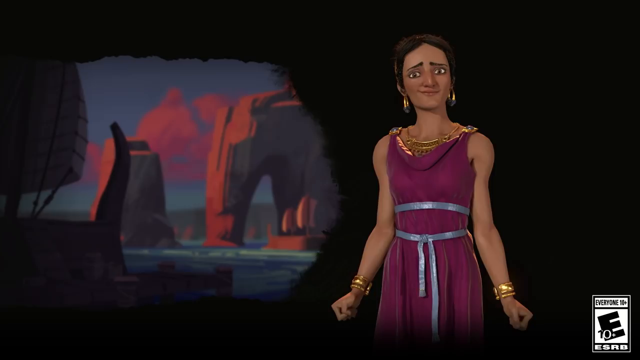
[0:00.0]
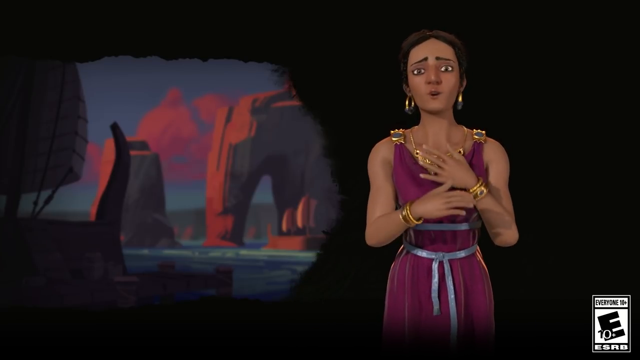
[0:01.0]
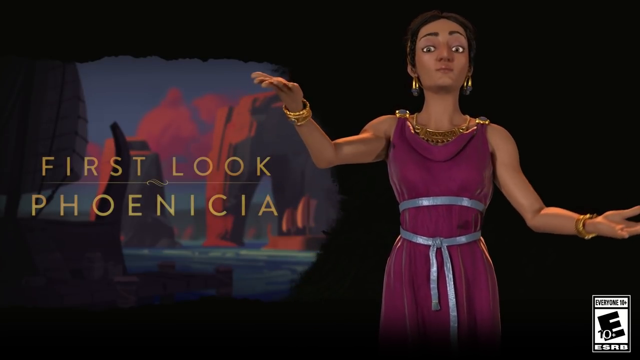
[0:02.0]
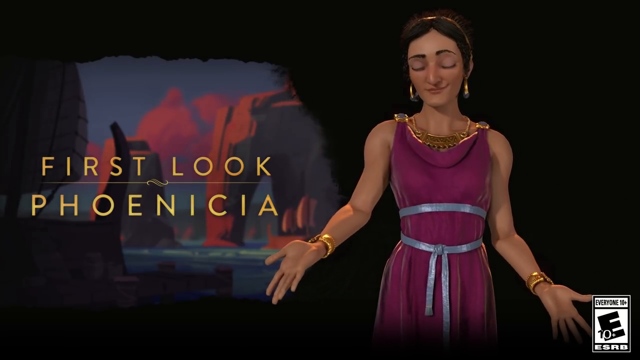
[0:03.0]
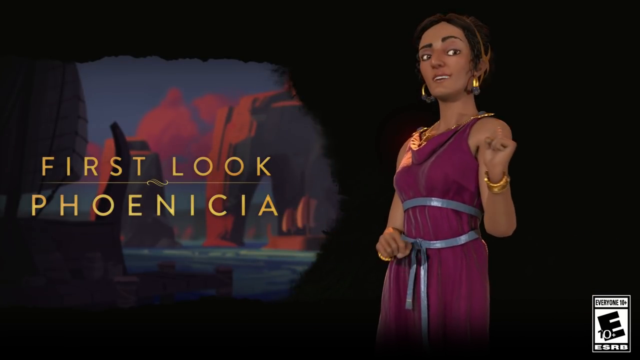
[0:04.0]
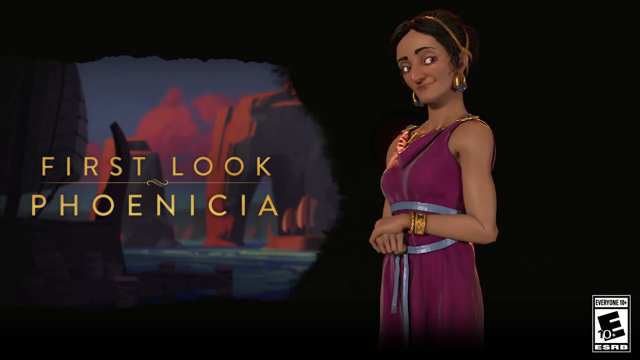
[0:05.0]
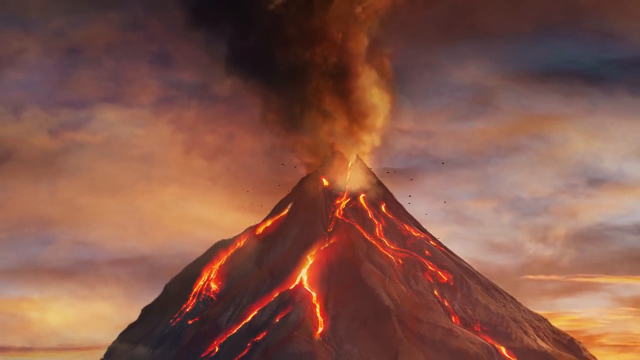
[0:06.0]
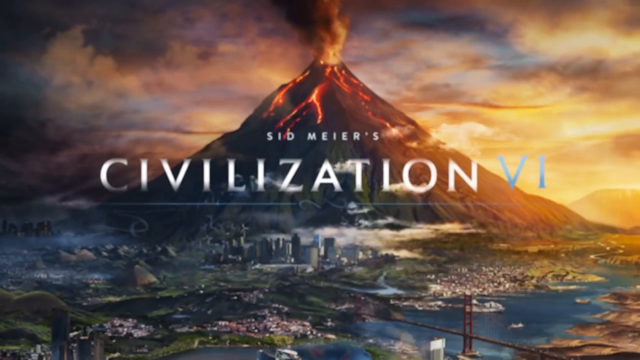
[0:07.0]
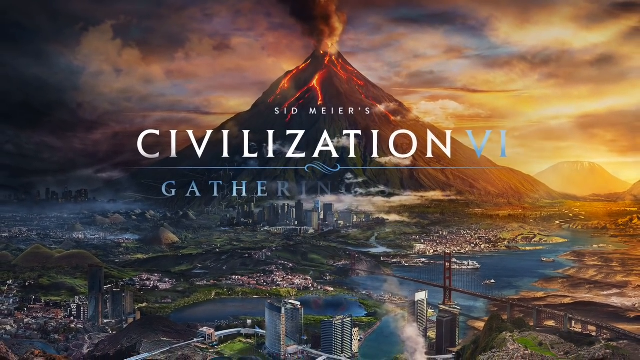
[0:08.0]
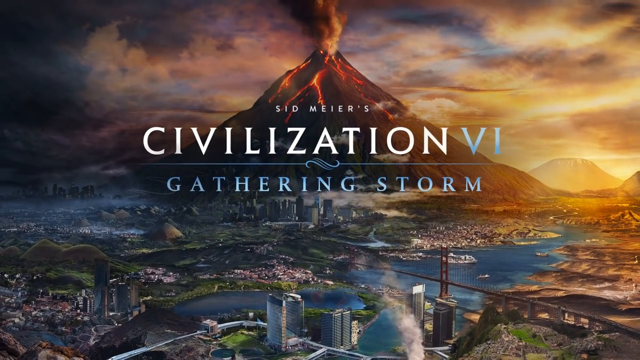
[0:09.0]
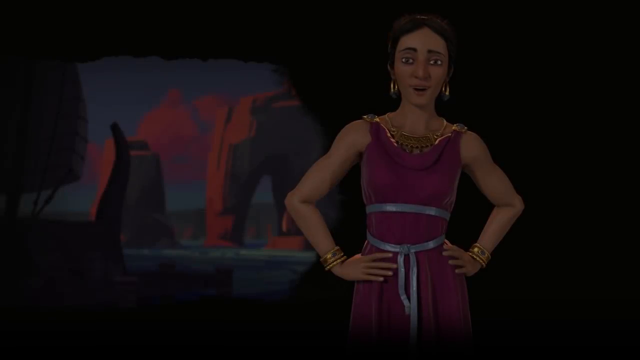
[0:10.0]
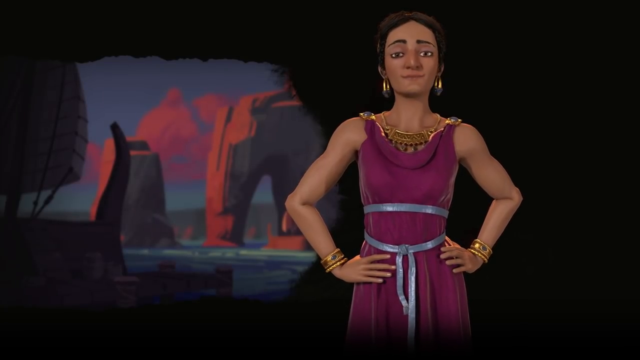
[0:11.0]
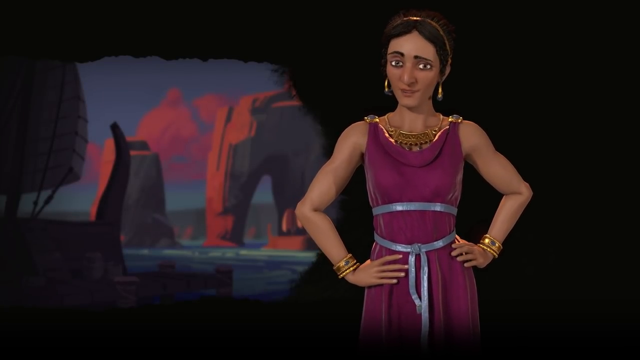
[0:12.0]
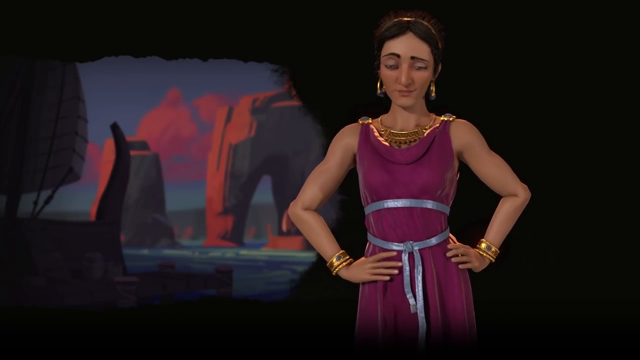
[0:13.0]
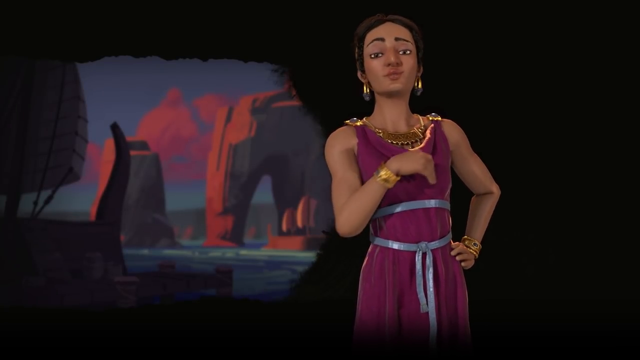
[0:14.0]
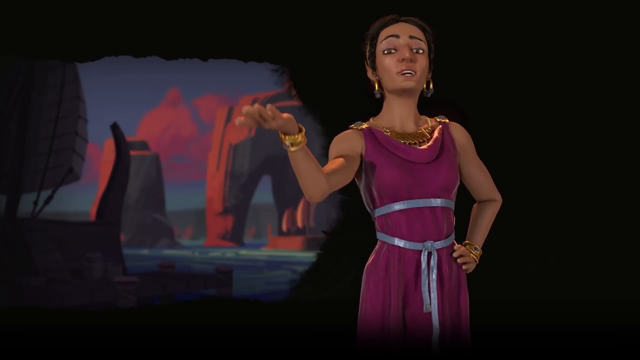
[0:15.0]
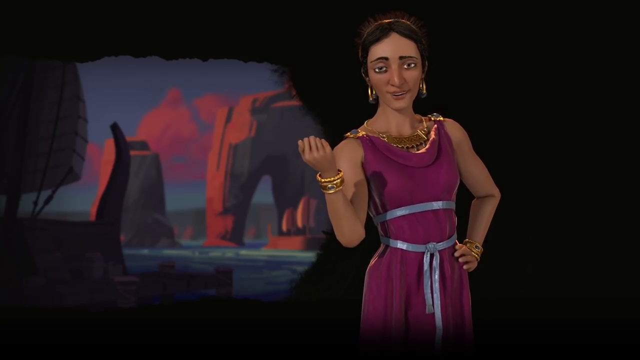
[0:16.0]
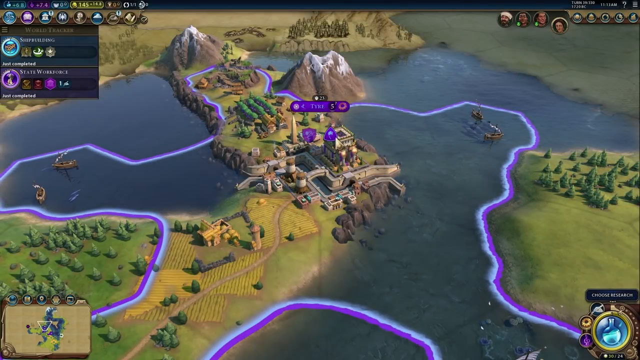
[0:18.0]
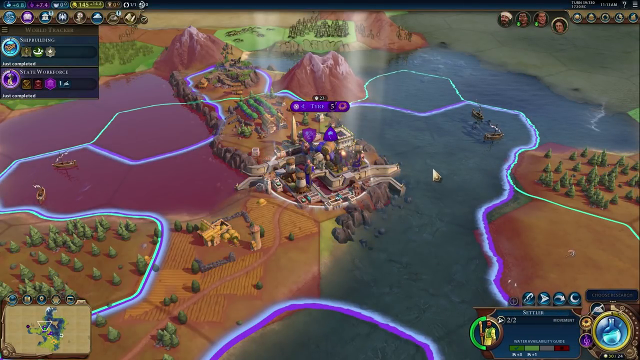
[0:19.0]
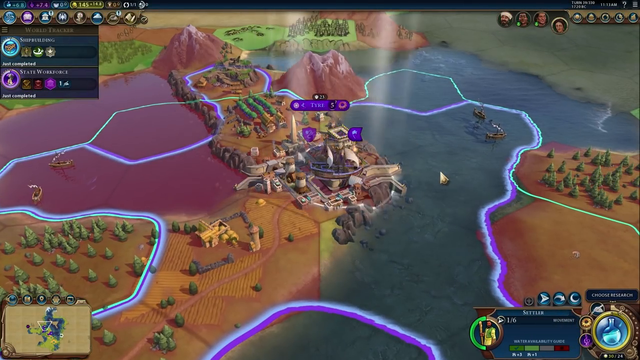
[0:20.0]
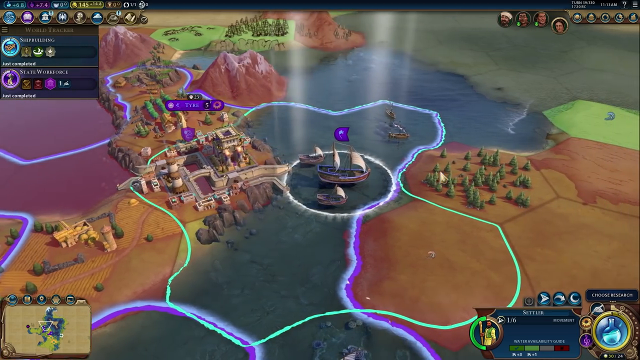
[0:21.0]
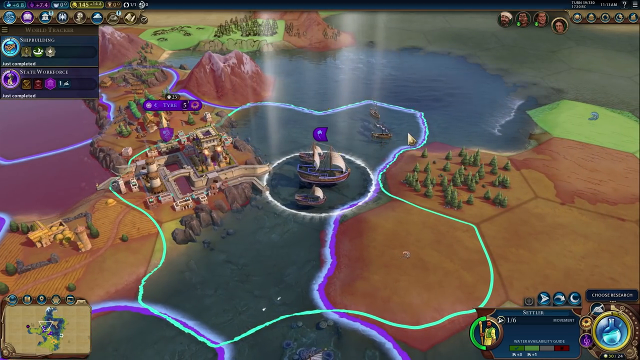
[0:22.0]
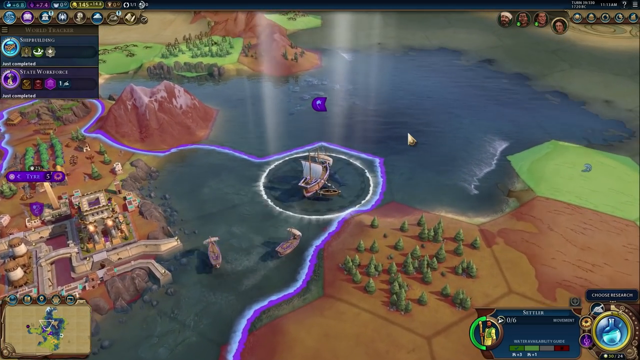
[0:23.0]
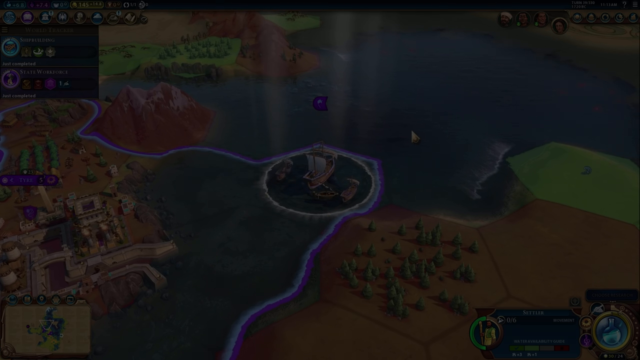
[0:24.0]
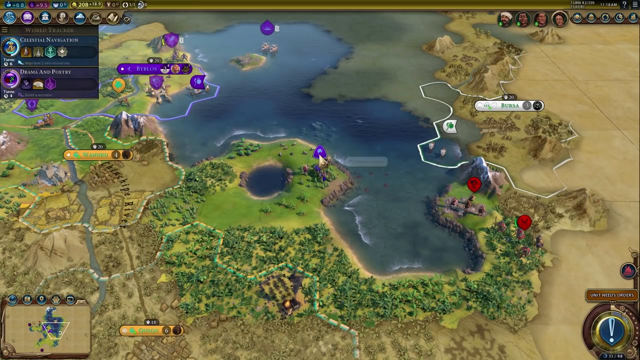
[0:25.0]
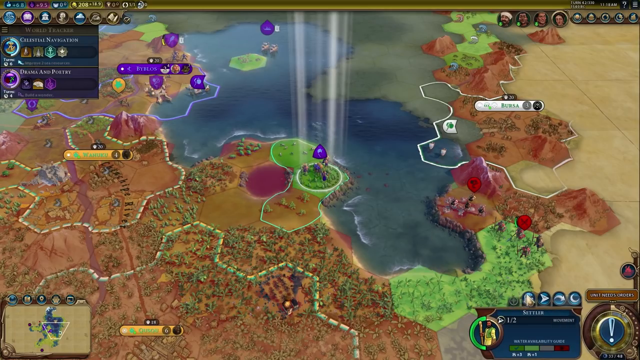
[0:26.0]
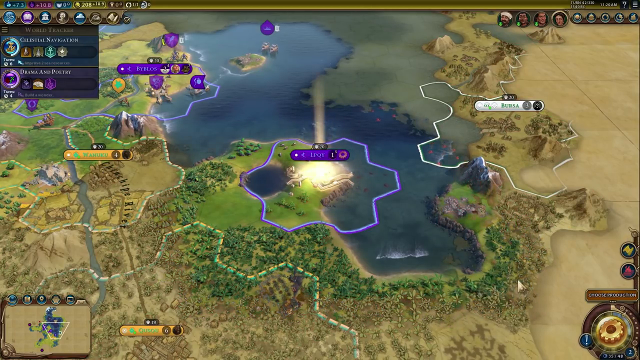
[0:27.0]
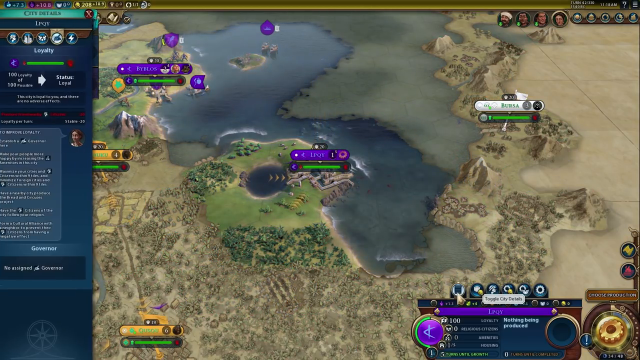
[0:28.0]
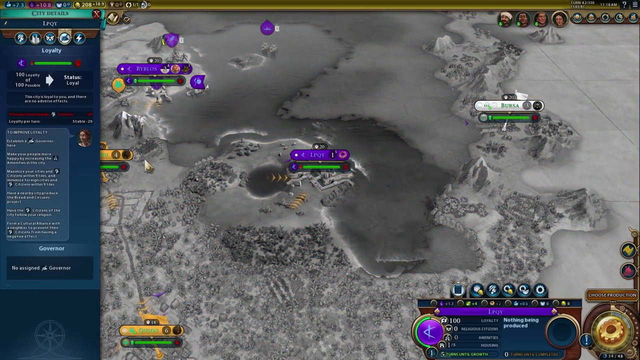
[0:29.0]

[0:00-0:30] What looks to be an animated character appears: a female character with dark hair pulled back, wearing gold jewelry, hoop earrings, a purple toga and gold bracelets. Next to her is a graphic that looks to be of red archways or rocks in a body of water, with yellow text on top of it reading "first look, Phoenicia". The character appears to be talking. A title screen then pops up reading "Sid Meier's Civilization VI", with an image of an erupting volcano in the background, cities down below, and bridges and waterways. The video cuts back to the female character, who is speaking. A map then appears with a cursor moving things around on it, showing some buildings and some trees.